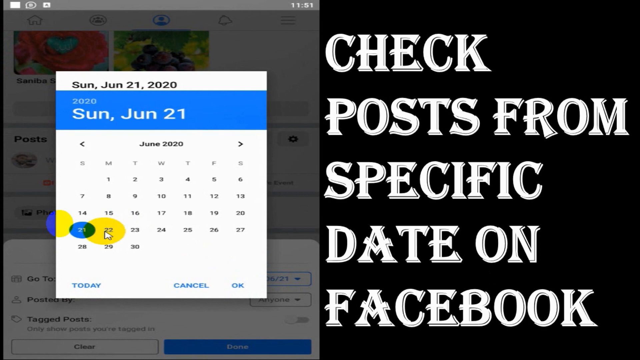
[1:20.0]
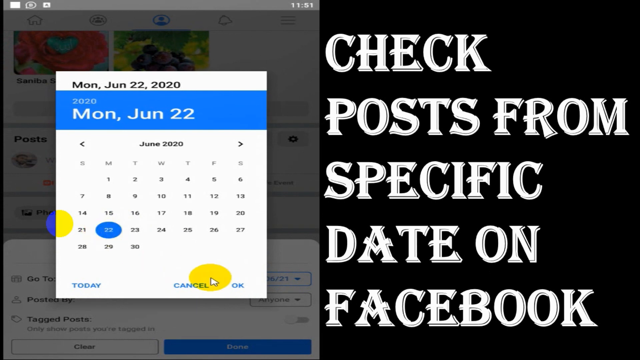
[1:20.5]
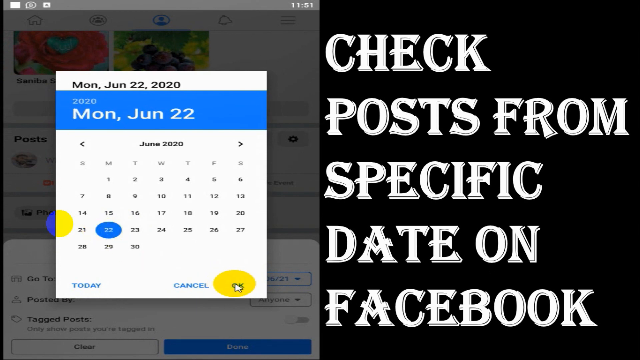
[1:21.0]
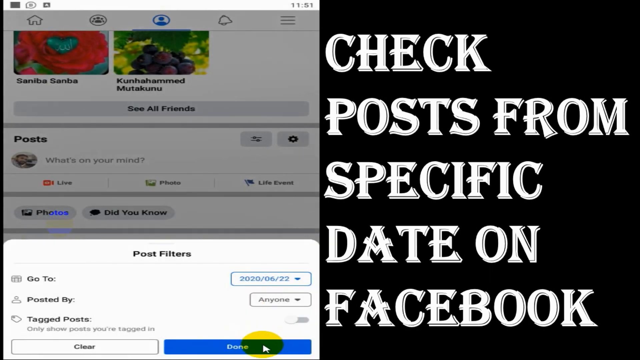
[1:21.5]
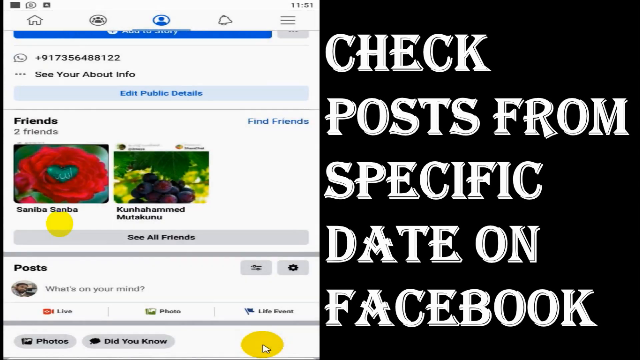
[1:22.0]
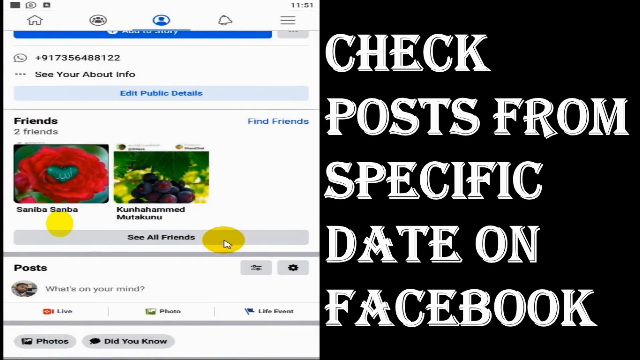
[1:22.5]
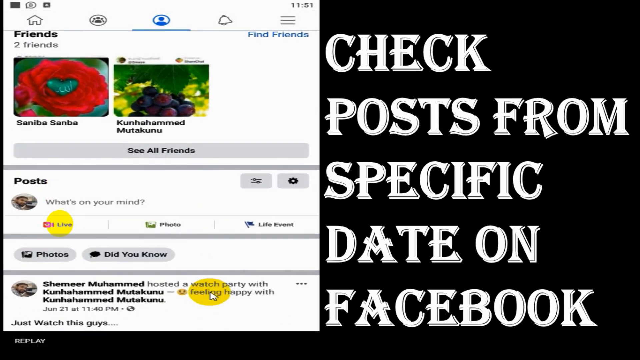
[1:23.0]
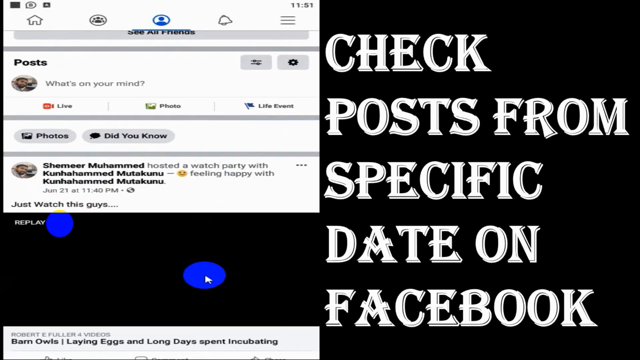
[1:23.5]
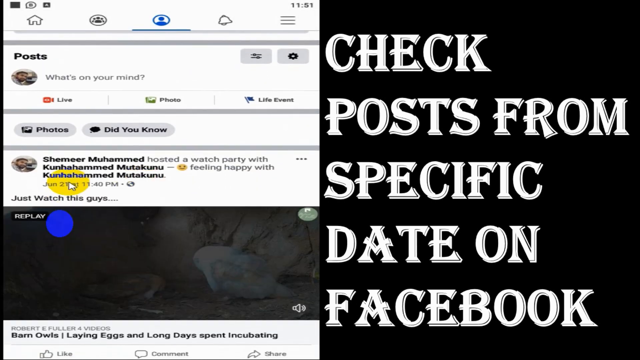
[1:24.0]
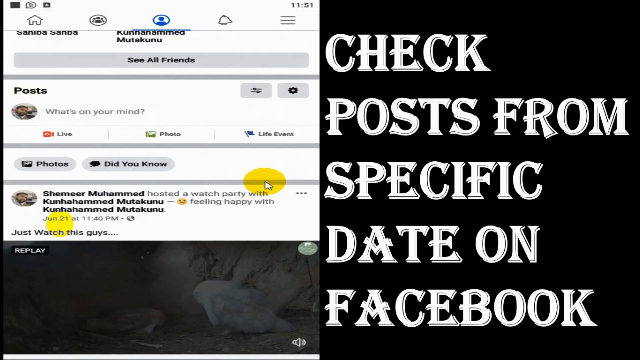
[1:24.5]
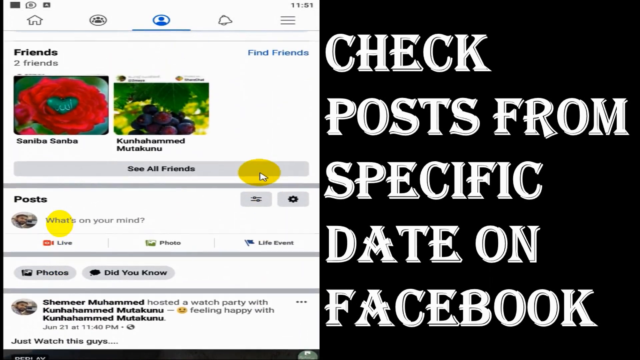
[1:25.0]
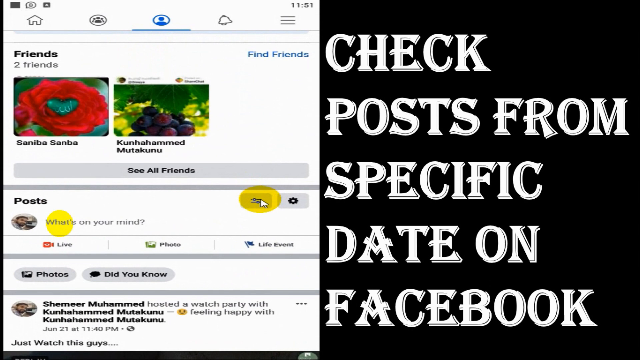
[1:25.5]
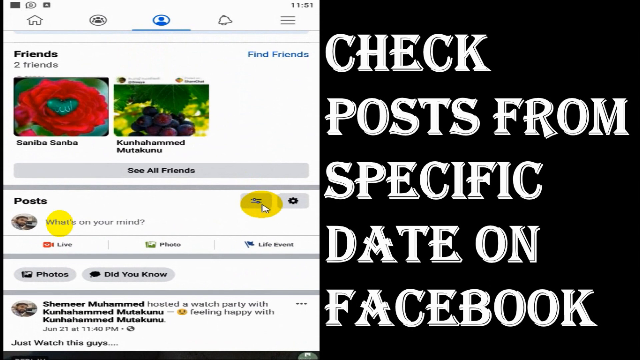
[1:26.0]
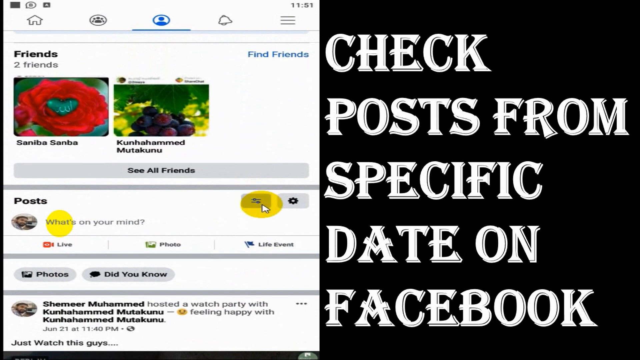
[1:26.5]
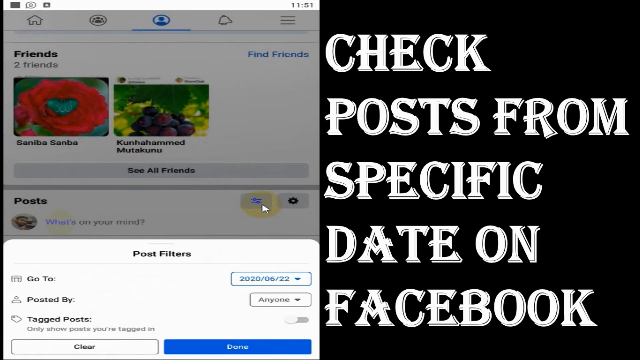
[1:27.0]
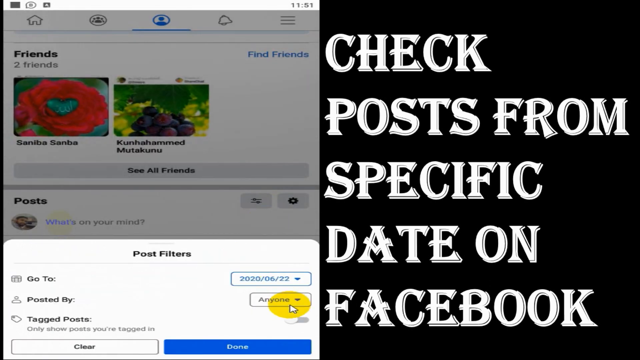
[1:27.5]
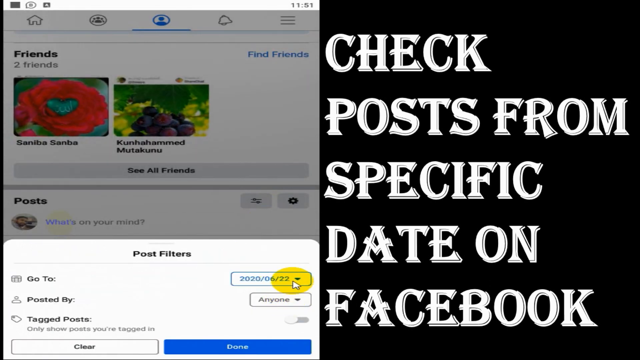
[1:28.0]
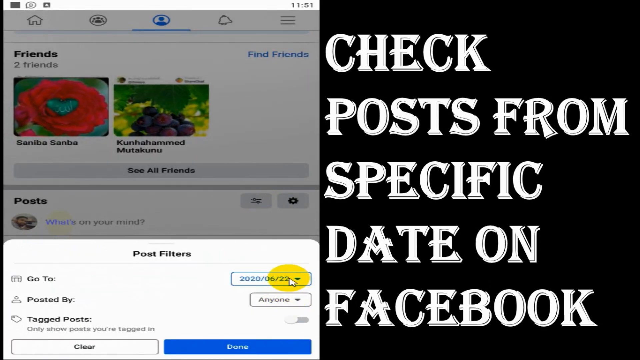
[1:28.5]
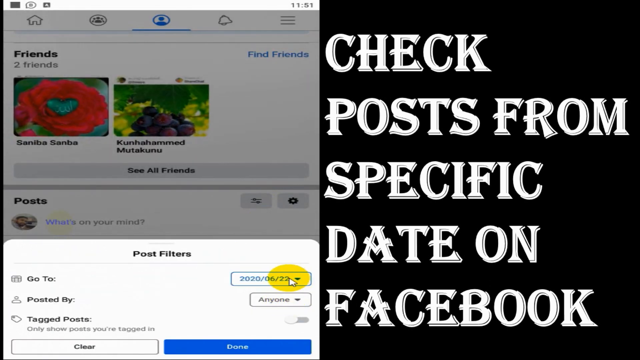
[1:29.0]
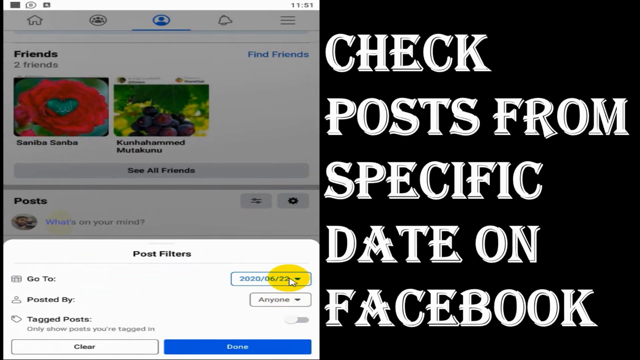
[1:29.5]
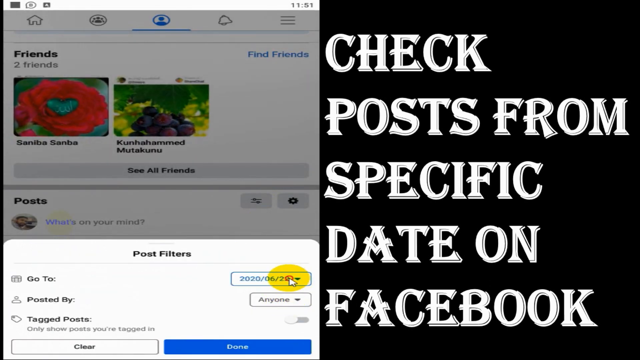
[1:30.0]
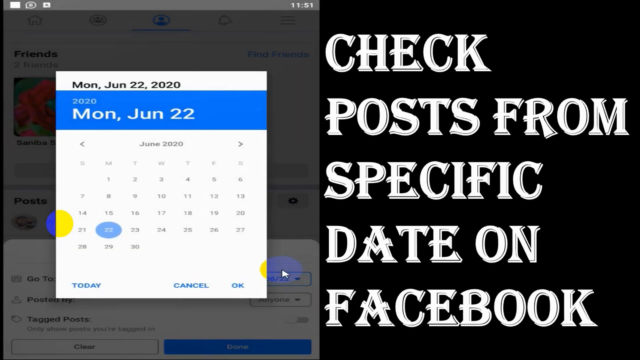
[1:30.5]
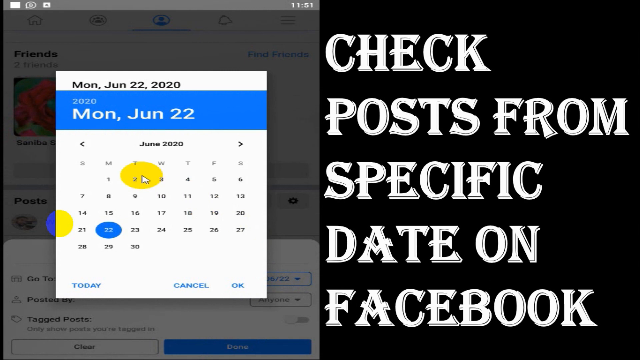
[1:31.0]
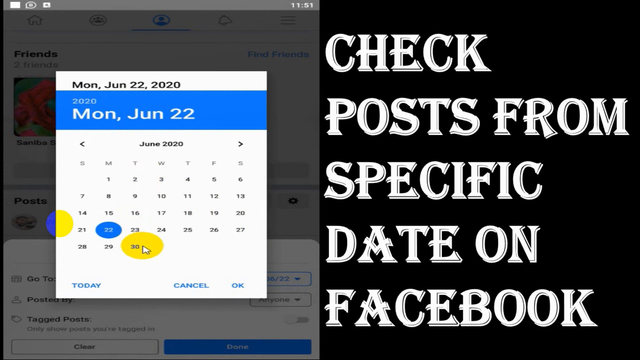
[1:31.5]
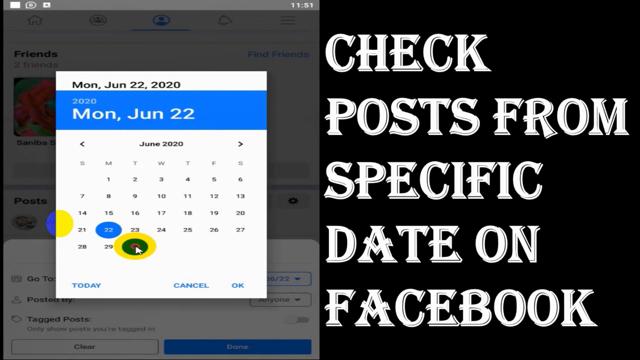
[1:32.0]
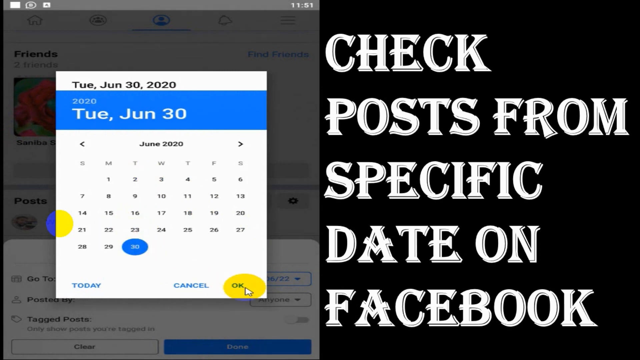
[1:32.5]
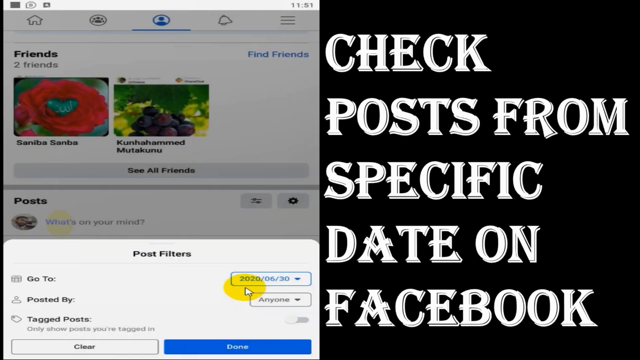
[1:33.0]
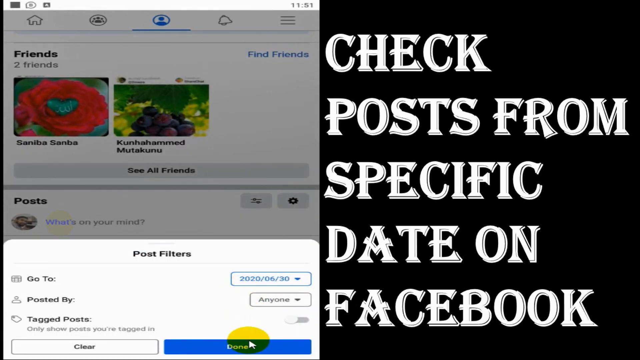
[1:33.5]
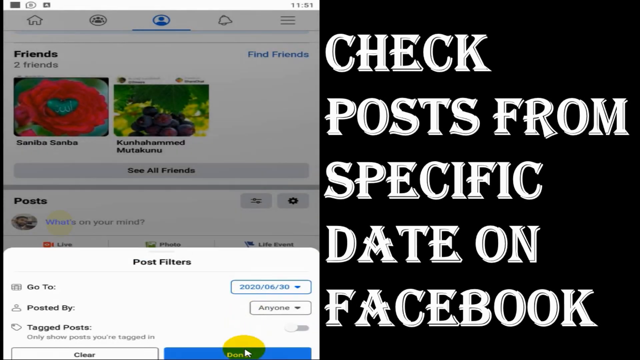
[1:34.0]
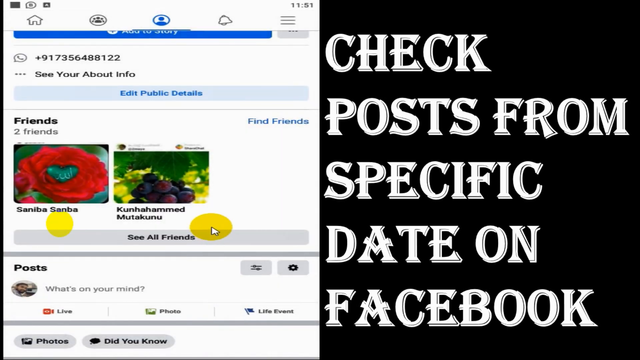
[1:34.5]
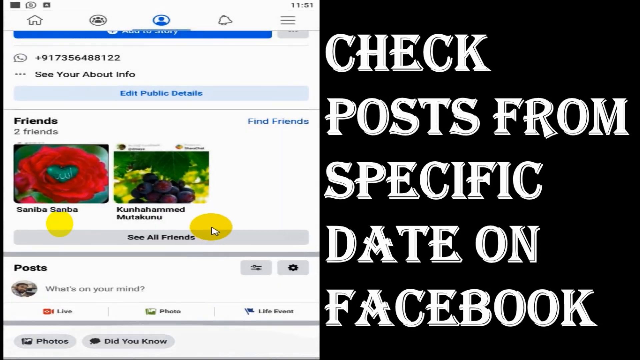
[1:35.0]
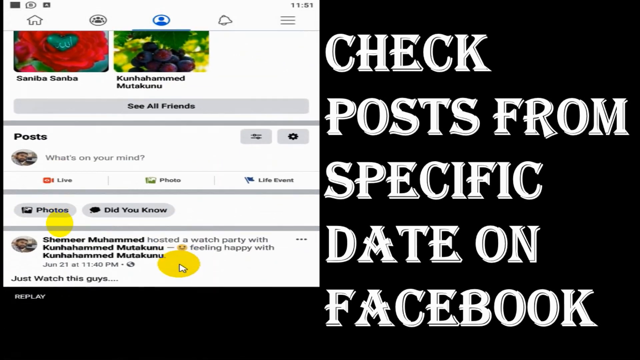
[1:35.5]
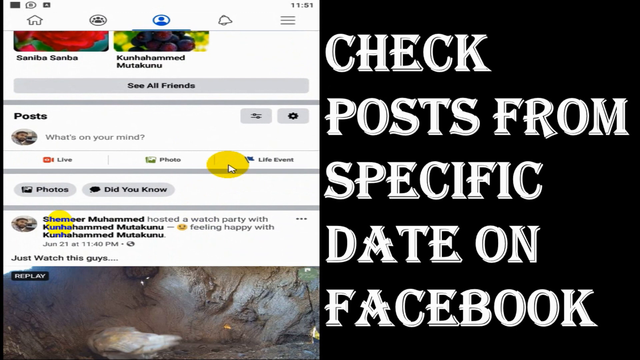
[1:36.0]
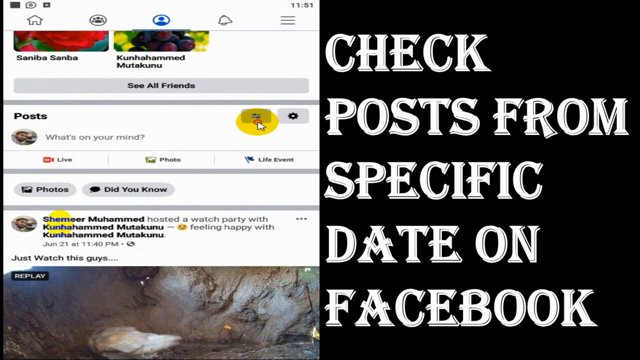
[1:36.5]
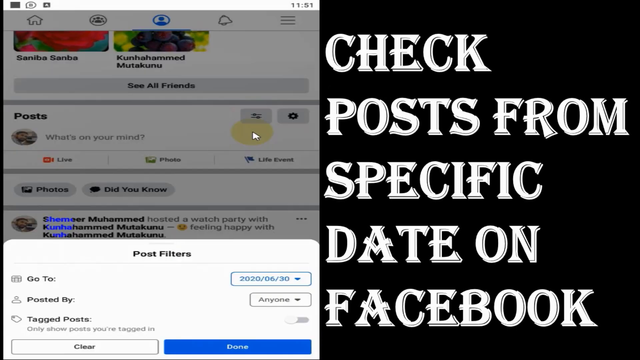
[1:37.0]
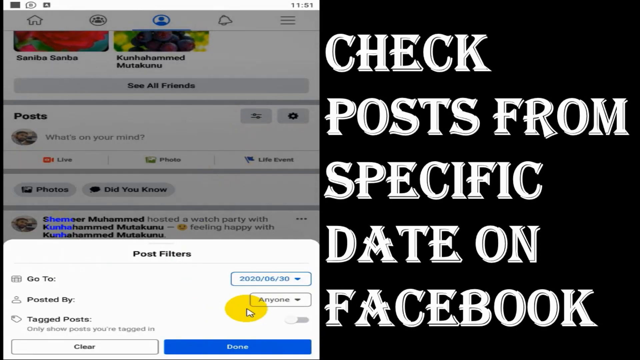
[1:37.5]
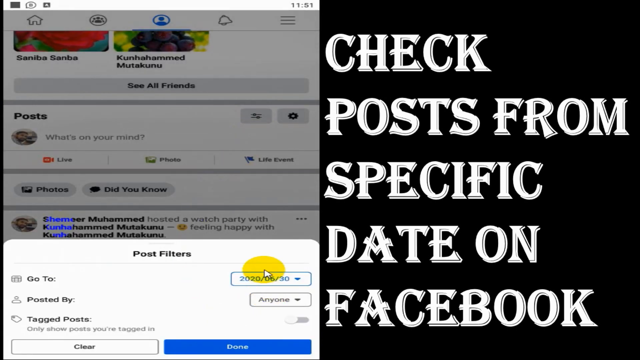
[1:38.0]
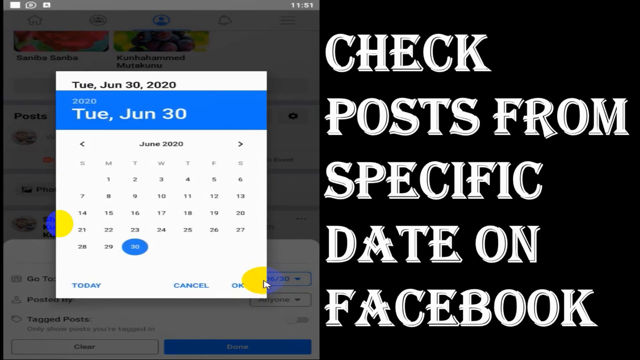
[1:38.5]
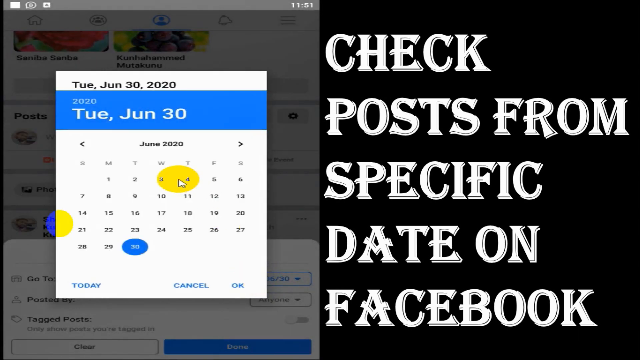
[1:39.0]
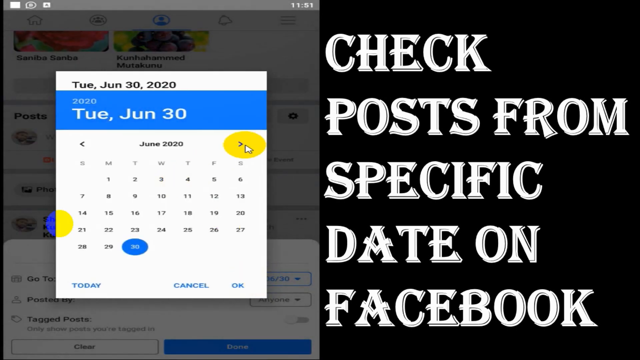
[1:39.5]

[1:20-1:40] A view of Facebook is on the left half of the screen, and the words "Check Posts from Specific Date on Facebook," in white on a black background, take up the right side. A mouse cursor highlighted in yellow hovers over the 22nd on a calendar in the Facebook app and selects it, making a blue circle appear. The cursor moves to the bottom right corner of the pop-up and clicks OK. Done is clicked at the bottom right of the screen, making the Post Filters window disappear. The Facebook window is scrolled down slightly and back up slightly, and the hamburger button is clicked again, bringing up the Post Filters window. The cursor hovers over the date in the Post Filters area and clicks it, bringing up the calendar again. The 30th of June 2020 is selected with a blue circle, OK is clicked, and Done is clicked at the bottom. The Facebook page is scrolled down again. The hamburger icon on the Posts area is clicked to bring up the Post Filters window, the date is clicked to bring up the calendar, and the right arrow is clicked a few times to advance the months.